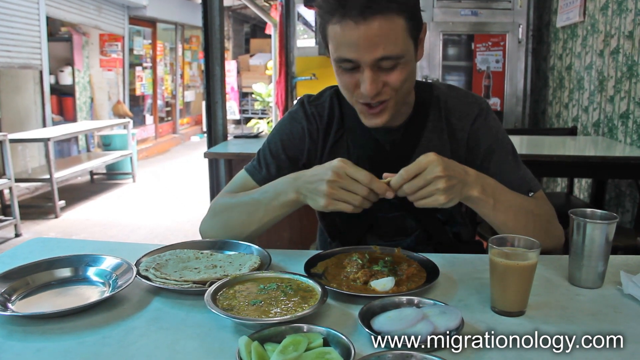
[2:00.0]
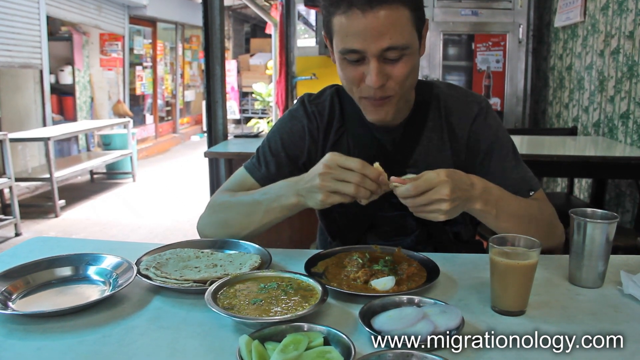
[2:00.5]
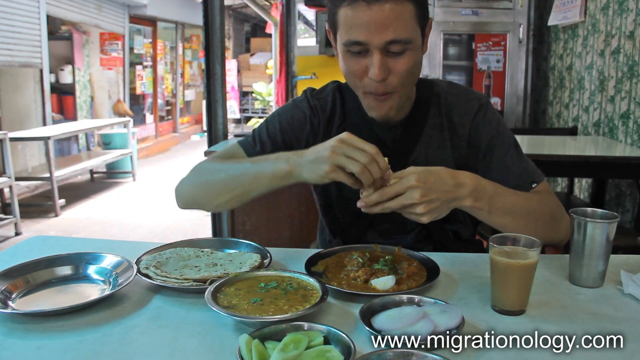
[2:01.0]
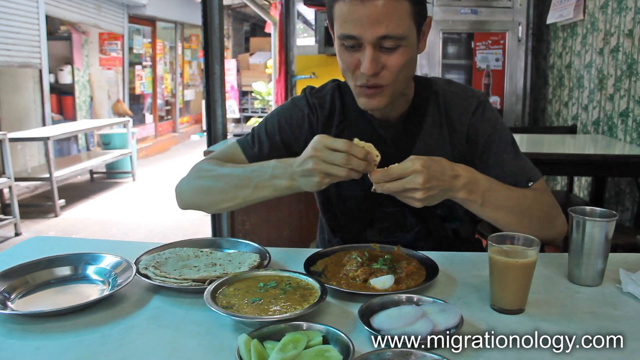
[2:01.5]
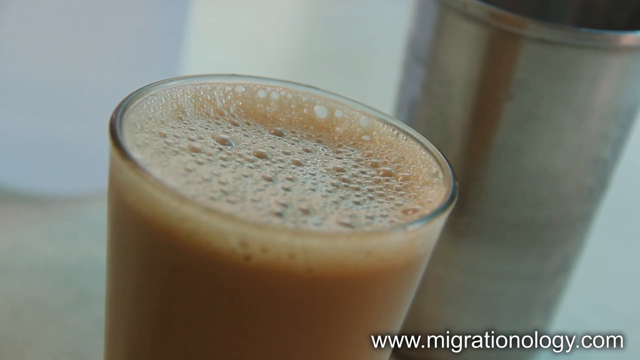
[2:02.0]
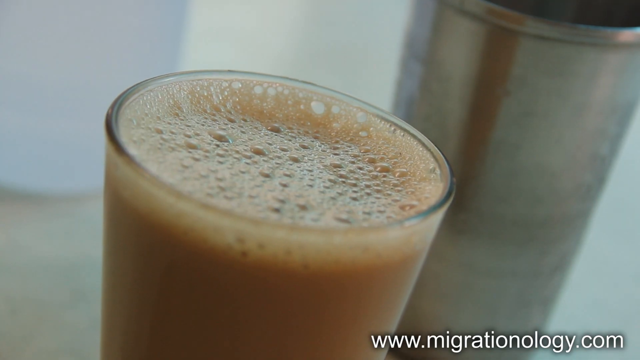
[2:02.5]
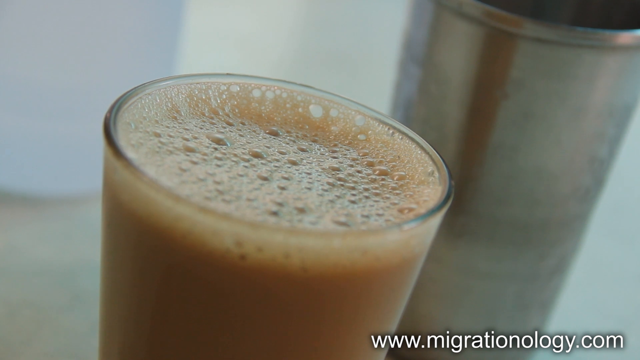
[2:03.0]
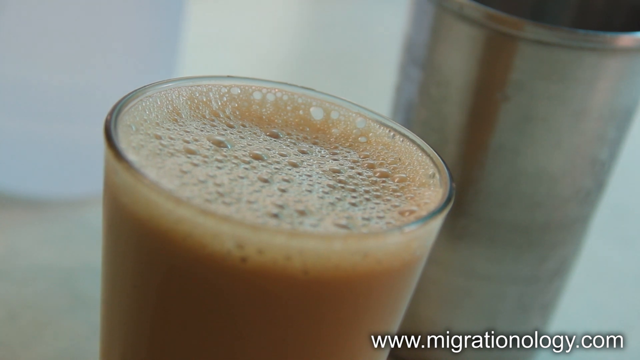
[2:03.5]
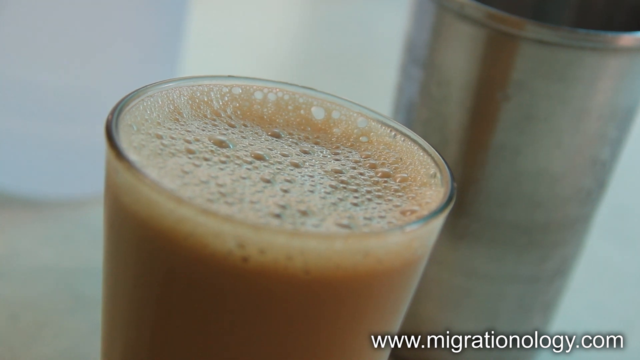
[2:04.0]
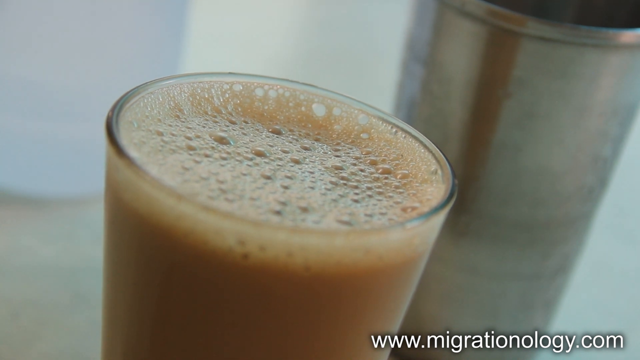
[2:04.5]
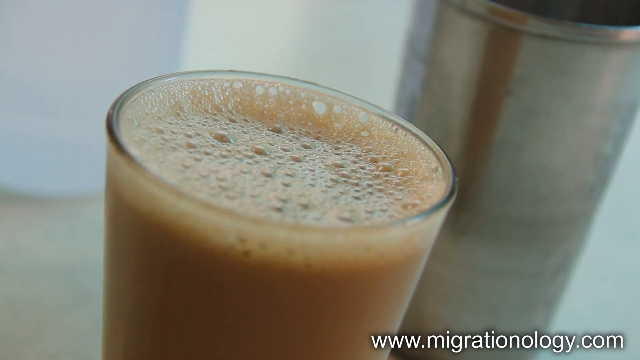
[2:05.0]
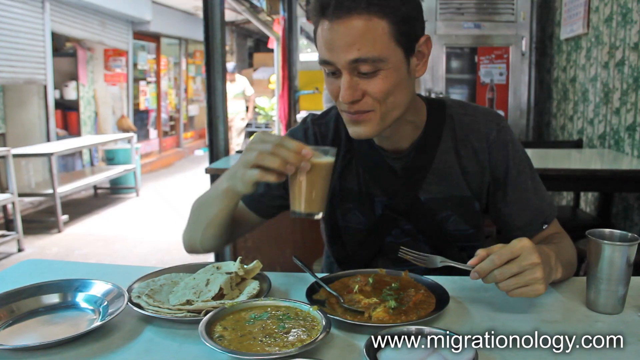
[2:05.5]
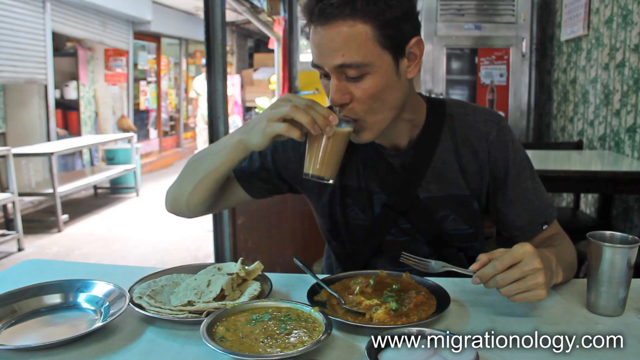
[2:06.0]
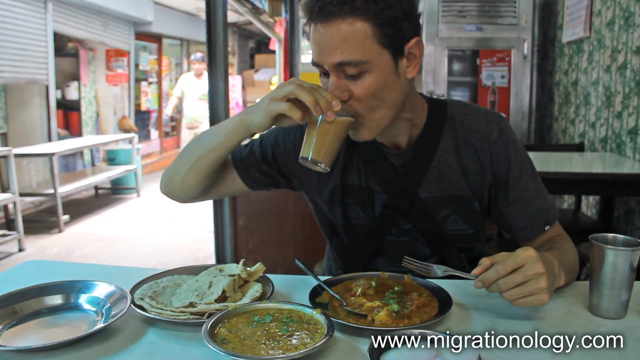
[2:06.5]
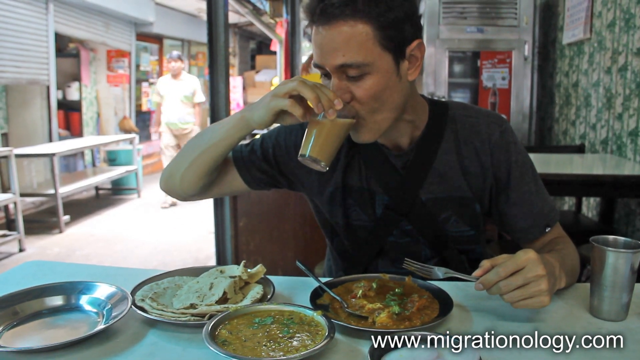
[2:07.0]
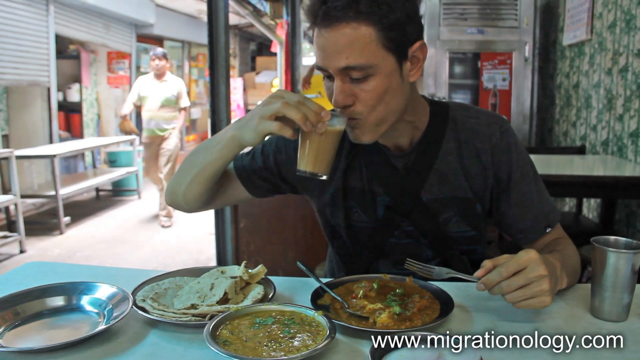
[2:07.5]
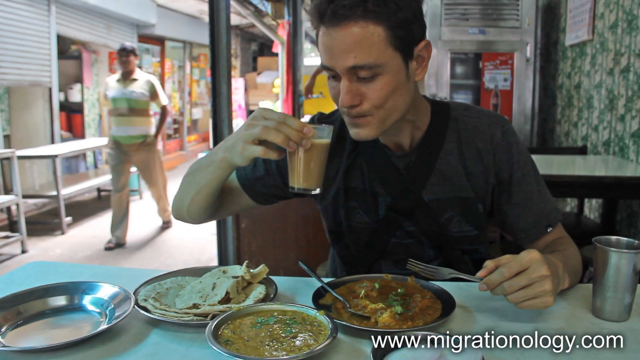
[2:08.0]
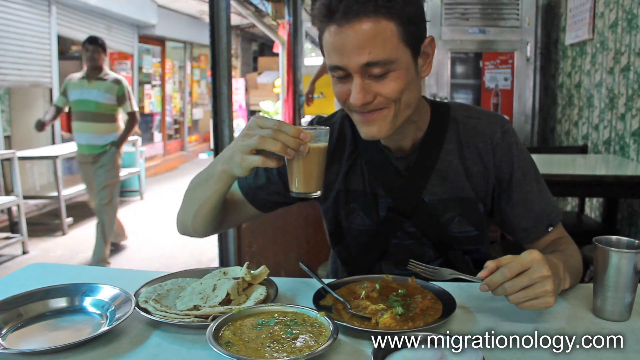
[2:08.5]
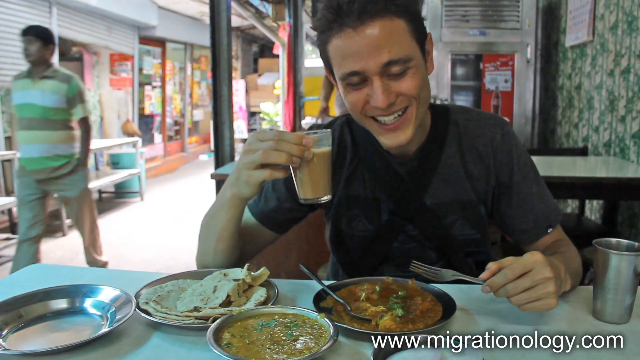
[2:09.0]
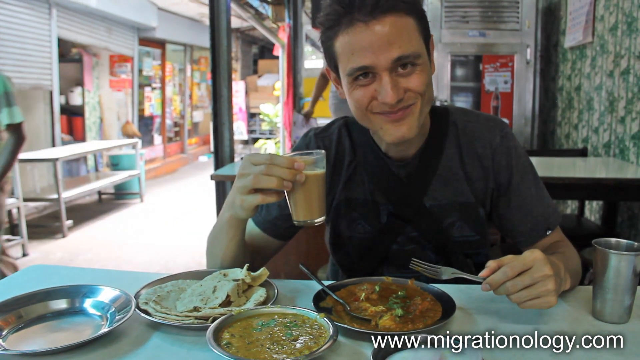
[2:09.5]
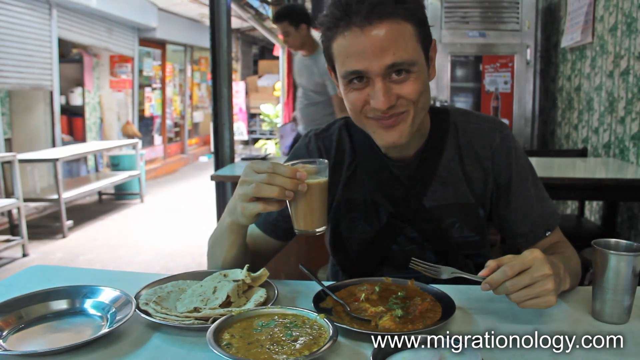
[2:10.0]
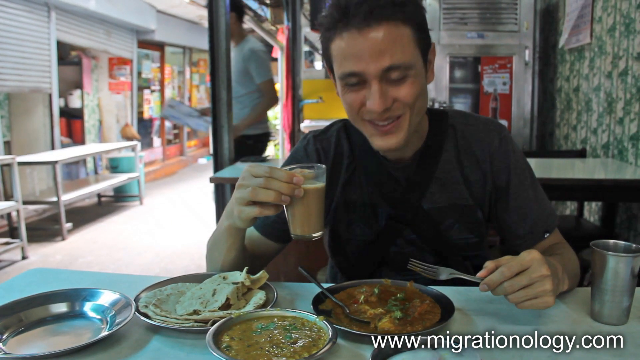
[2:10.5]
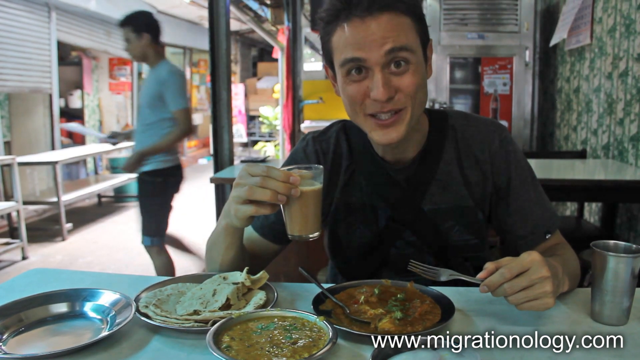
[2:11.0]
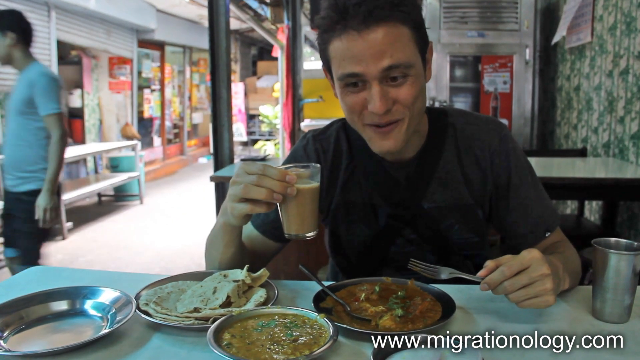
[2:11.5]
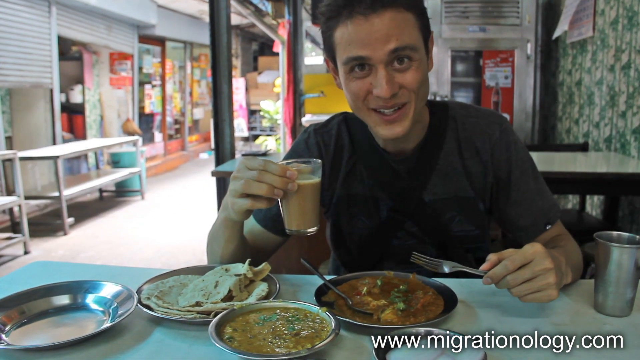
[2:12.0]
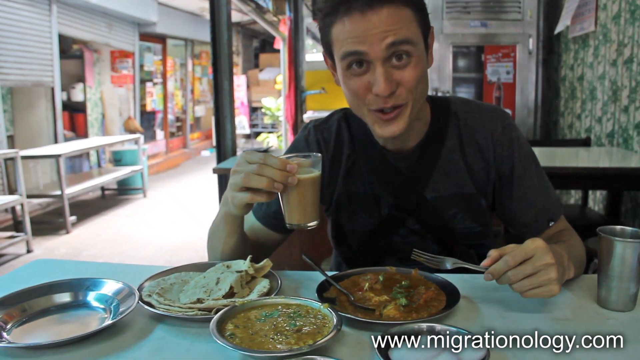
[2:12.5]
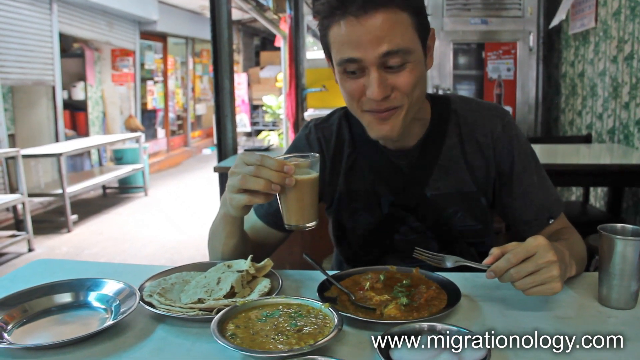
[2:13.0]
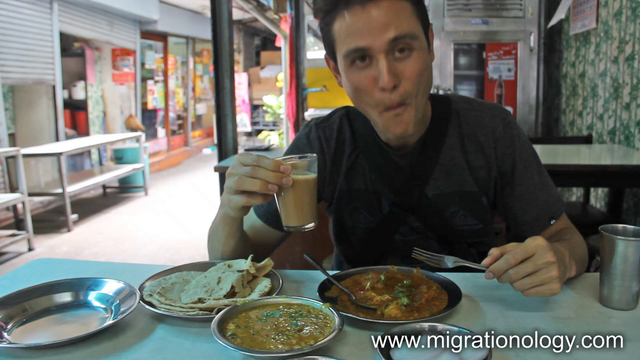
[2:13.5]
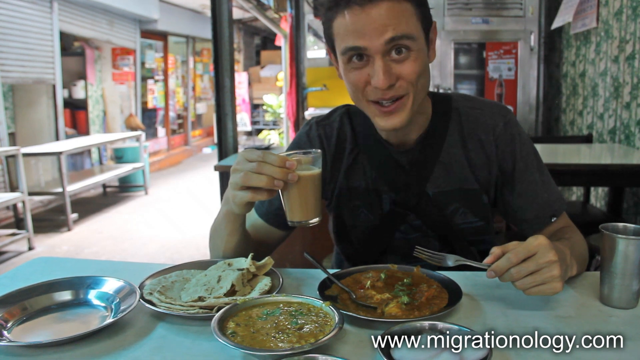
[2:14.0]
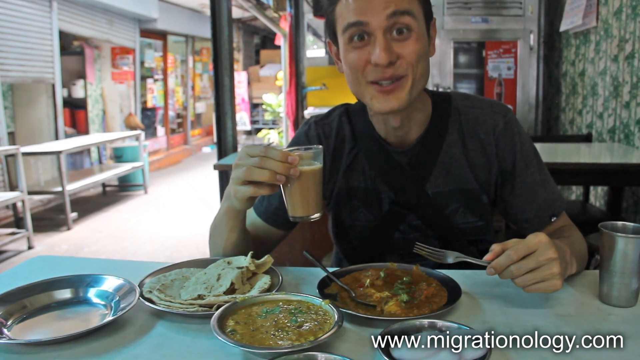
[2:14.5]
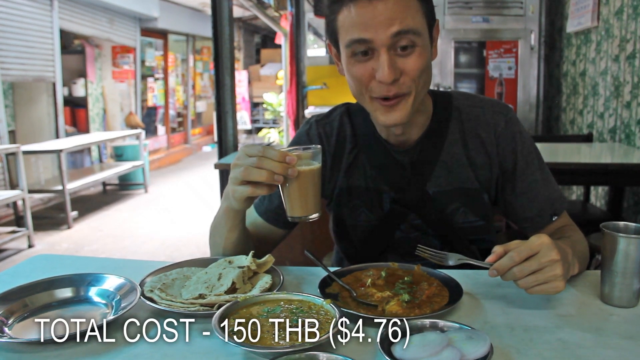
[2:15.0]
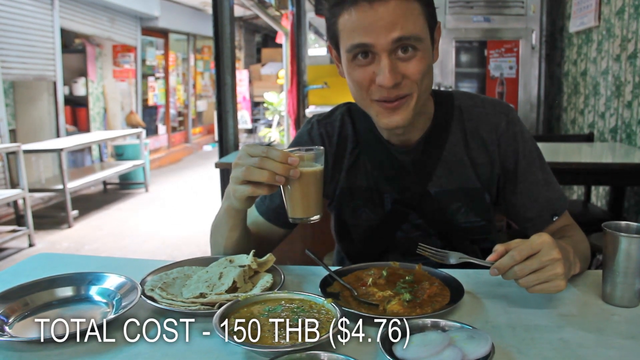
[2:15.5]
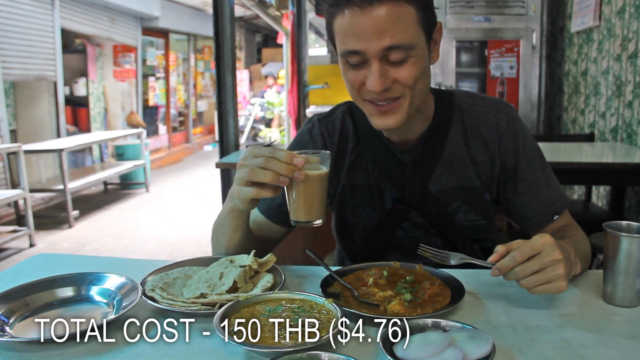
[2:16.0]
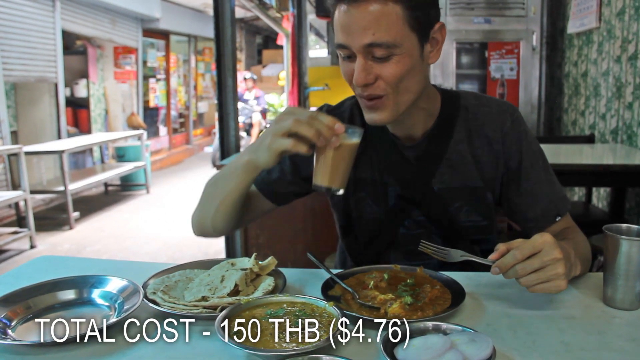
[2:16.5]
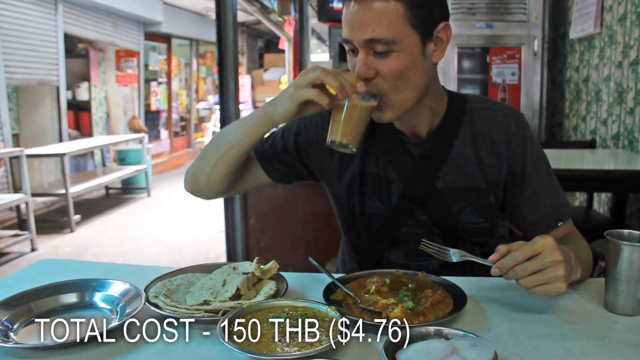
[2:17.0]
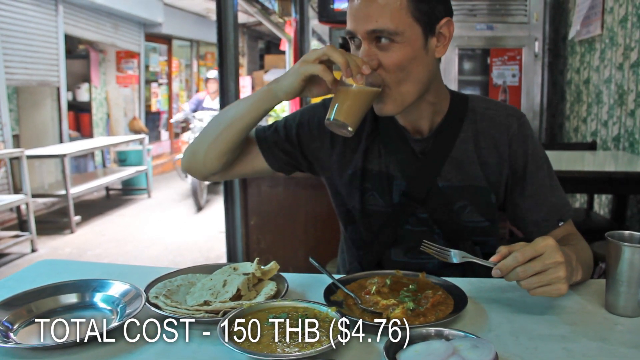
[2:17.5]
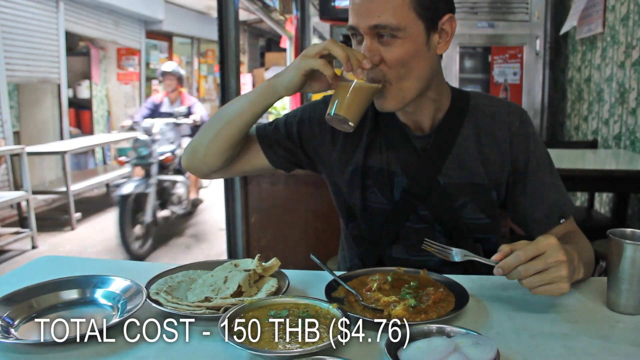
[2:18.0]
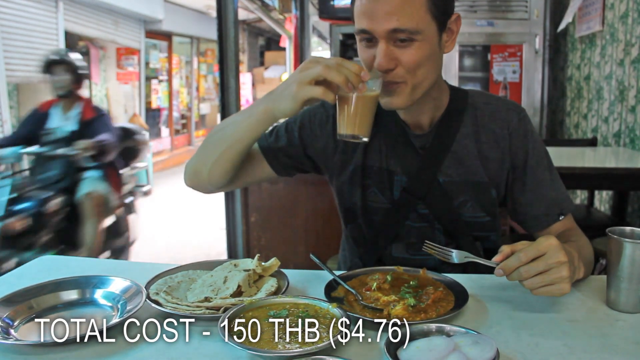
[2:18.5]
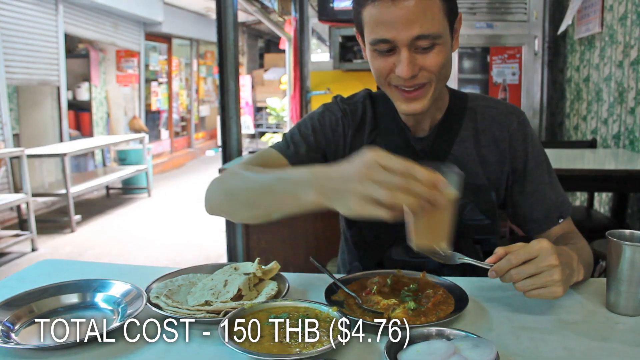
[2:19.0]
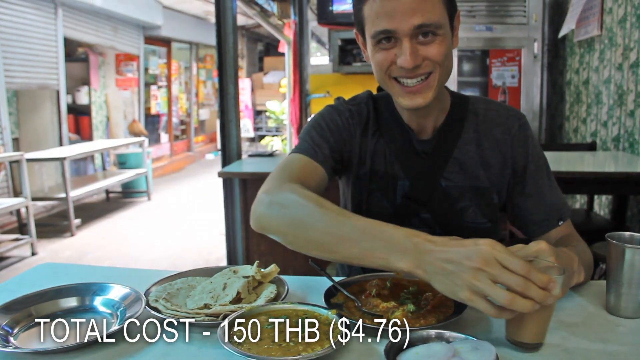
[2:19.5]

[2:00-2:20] The man takes some more bread. A close-up shows the drink that was prepared earlier; it looks like chocolate milk, perhaps a little lighter, a light brown. He seems very pleased with it, takes a sip, shakes his head, talks to the camera, and smiles. Text then appears on the screen, presumably the price of the whole meal: "$150 THB", which is "$4.76 USD".